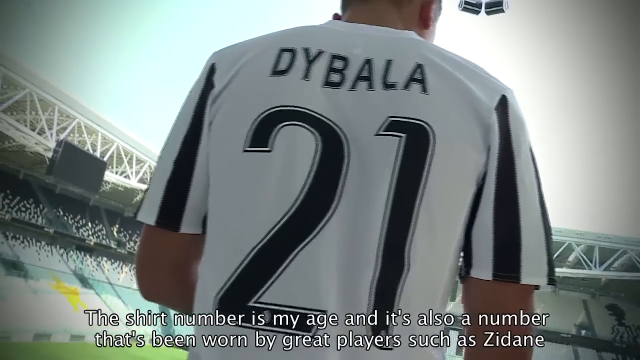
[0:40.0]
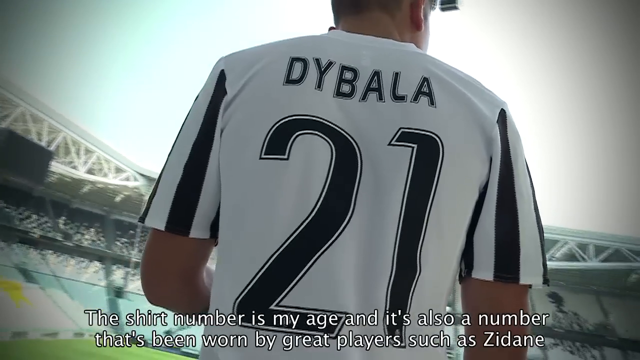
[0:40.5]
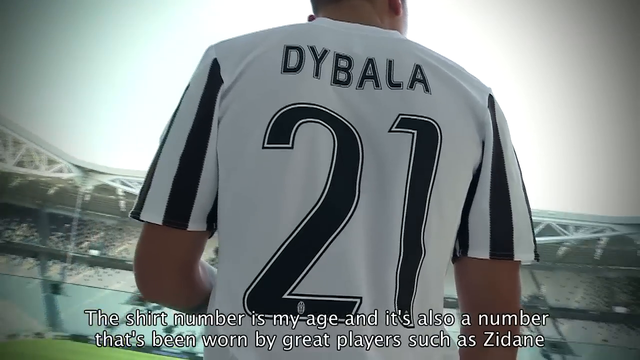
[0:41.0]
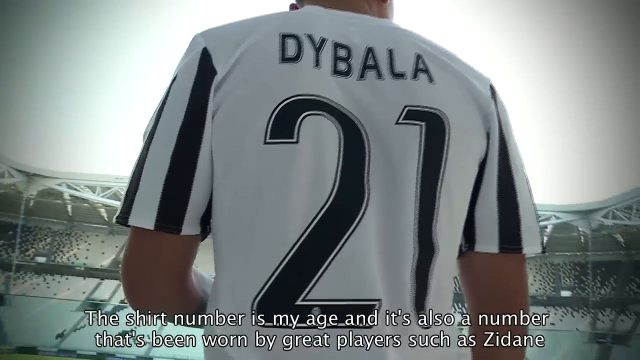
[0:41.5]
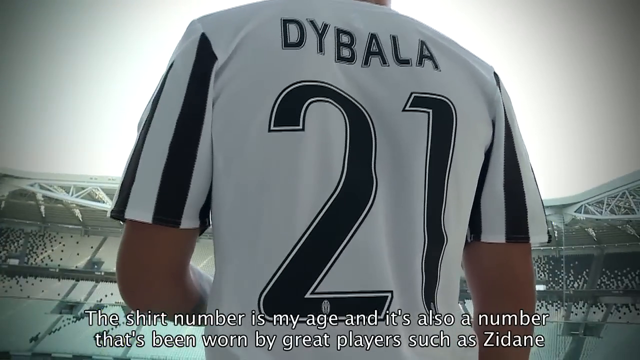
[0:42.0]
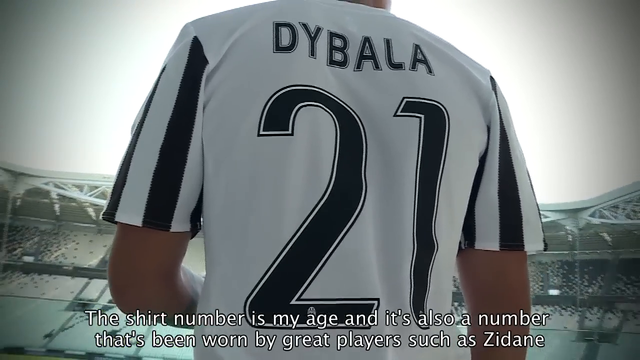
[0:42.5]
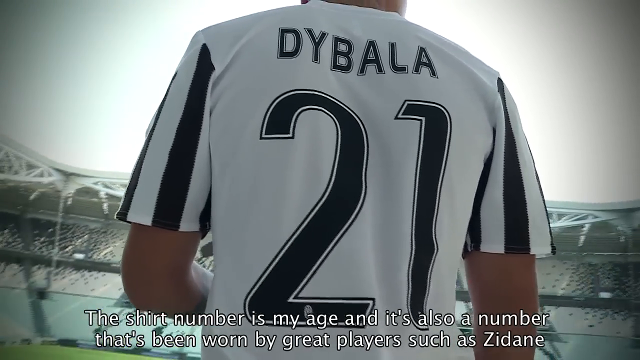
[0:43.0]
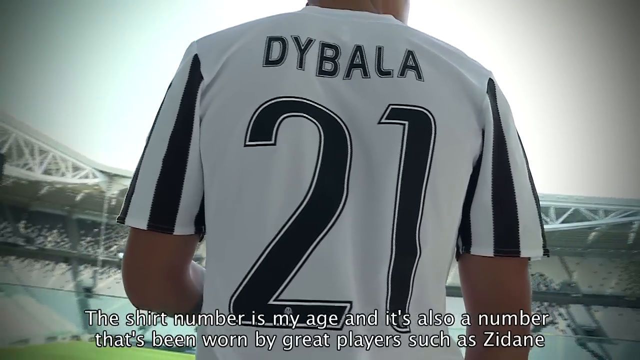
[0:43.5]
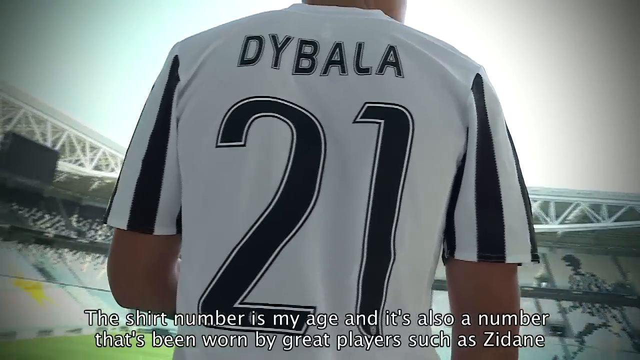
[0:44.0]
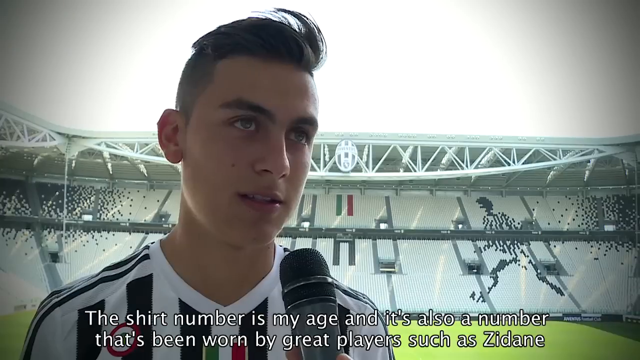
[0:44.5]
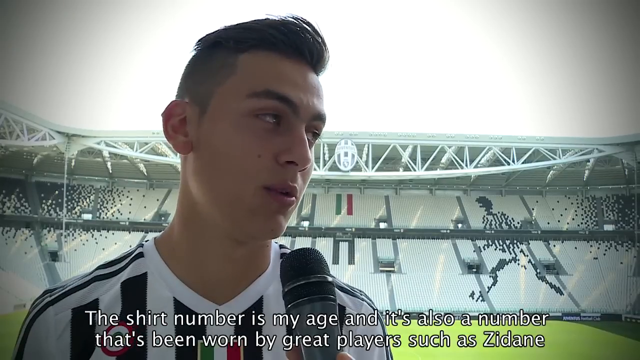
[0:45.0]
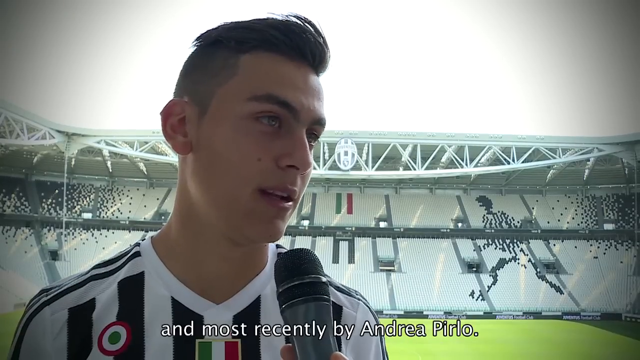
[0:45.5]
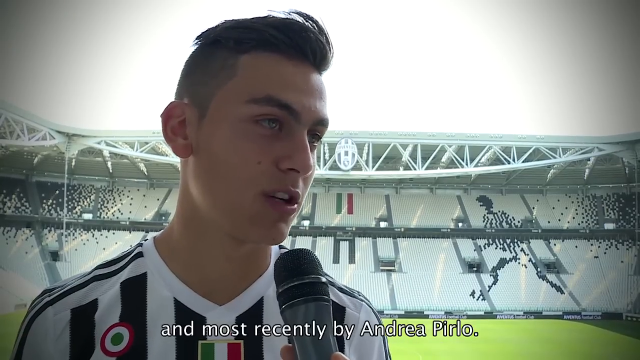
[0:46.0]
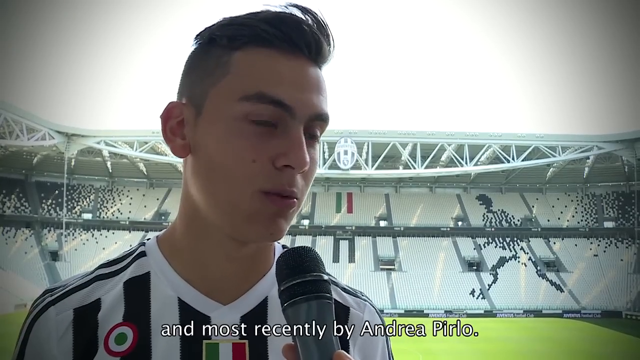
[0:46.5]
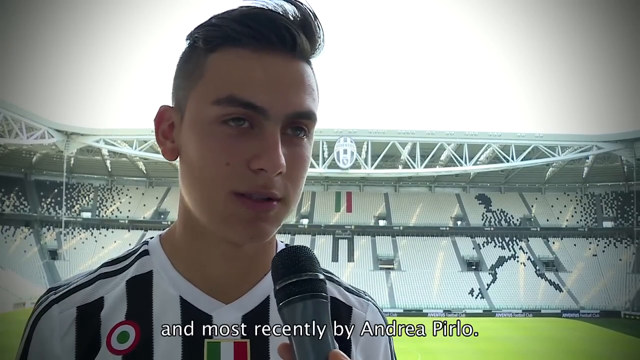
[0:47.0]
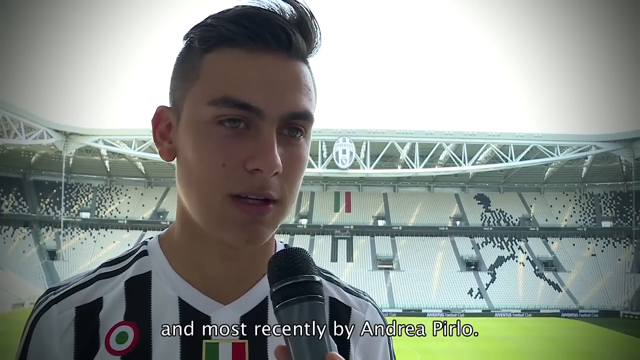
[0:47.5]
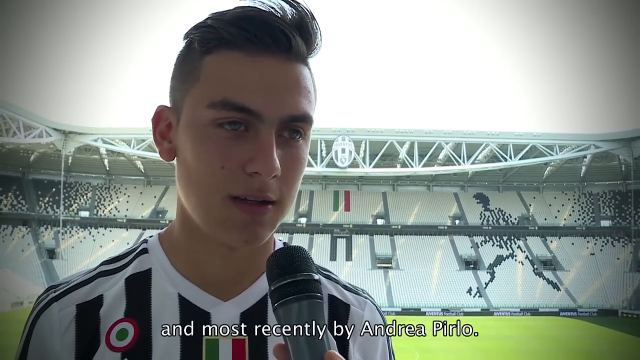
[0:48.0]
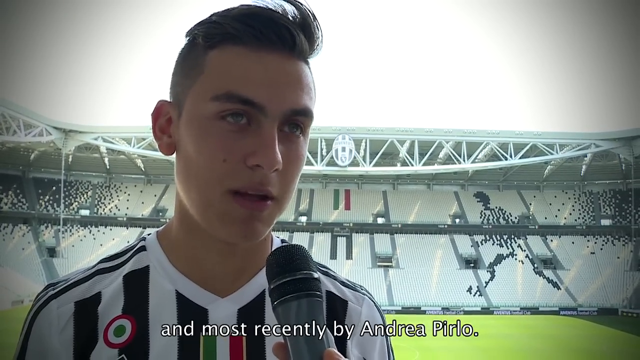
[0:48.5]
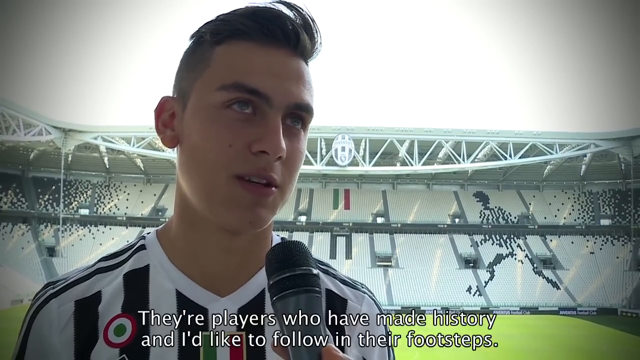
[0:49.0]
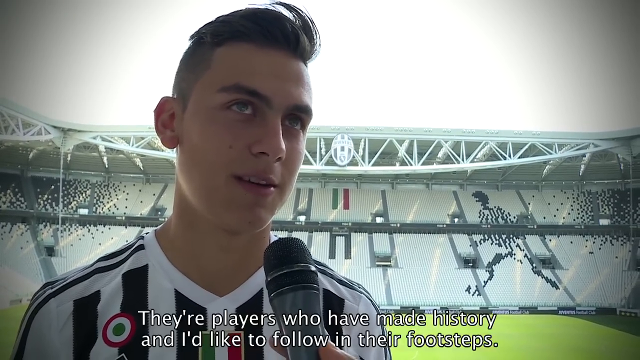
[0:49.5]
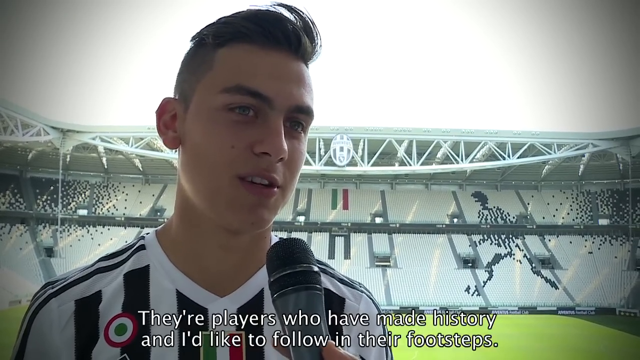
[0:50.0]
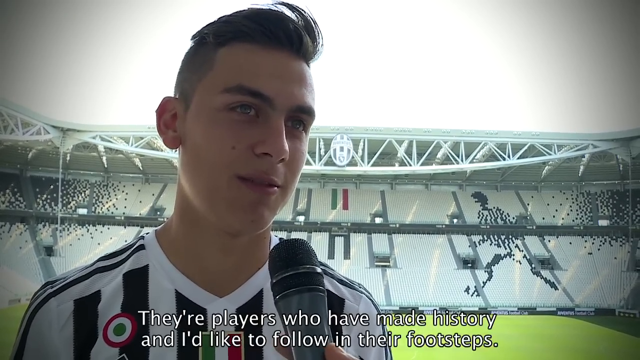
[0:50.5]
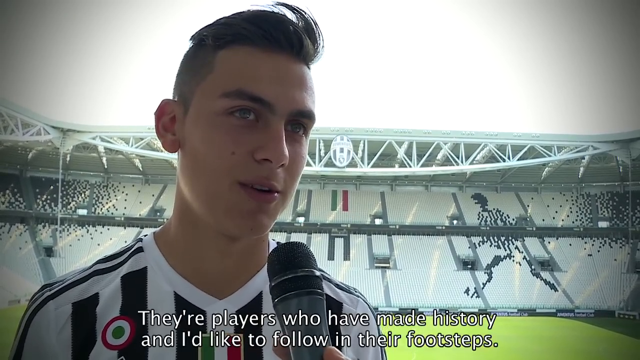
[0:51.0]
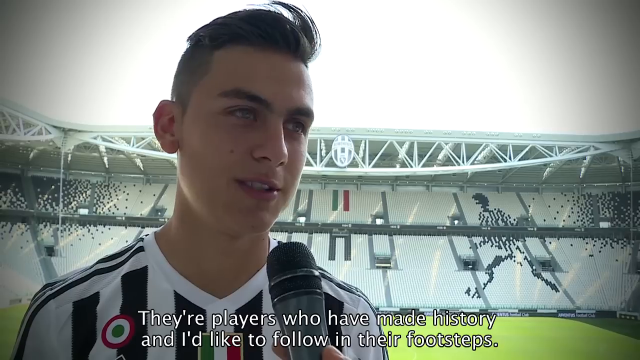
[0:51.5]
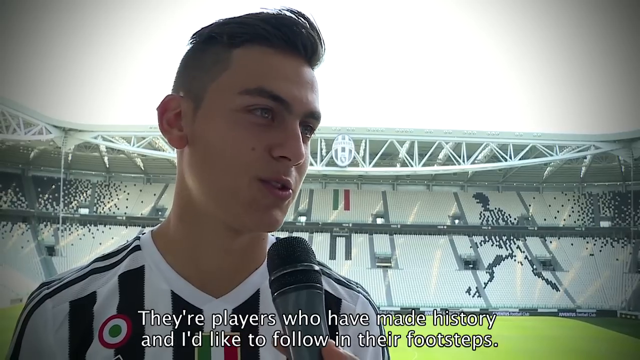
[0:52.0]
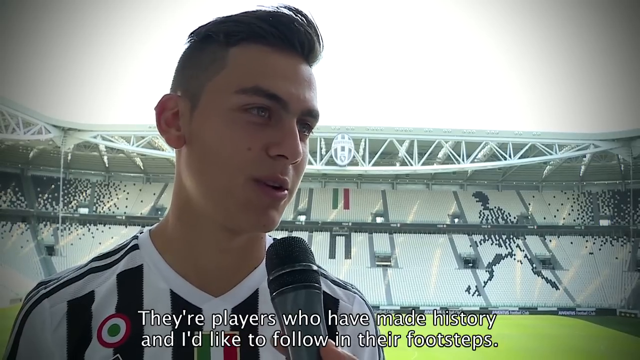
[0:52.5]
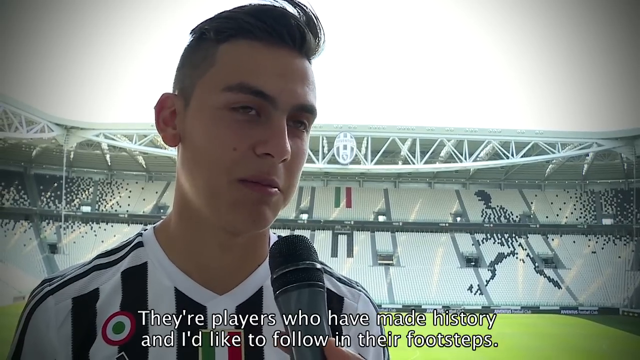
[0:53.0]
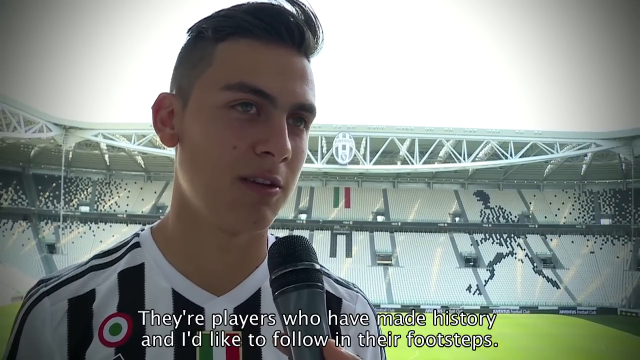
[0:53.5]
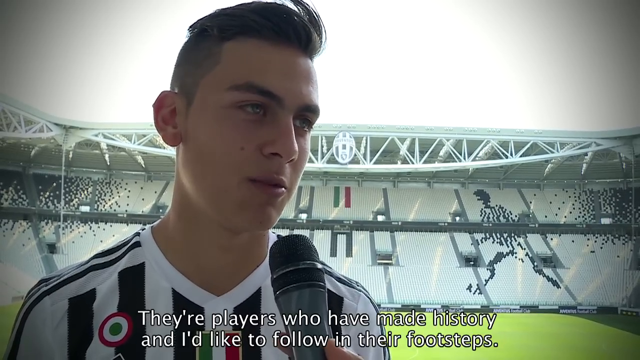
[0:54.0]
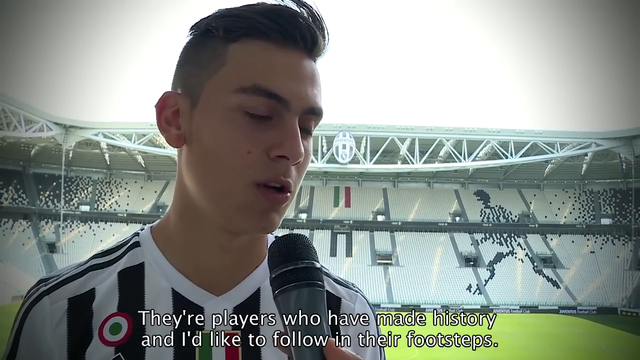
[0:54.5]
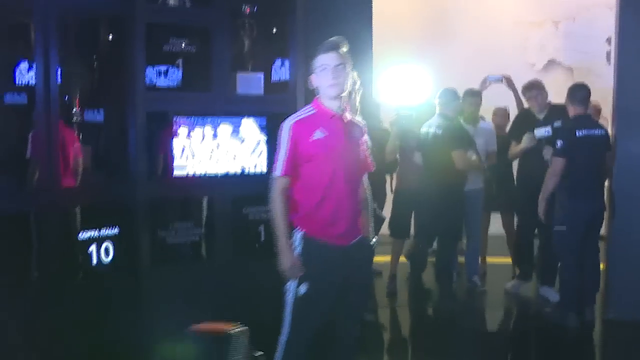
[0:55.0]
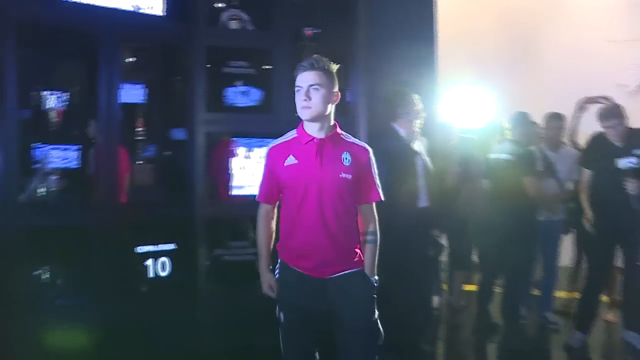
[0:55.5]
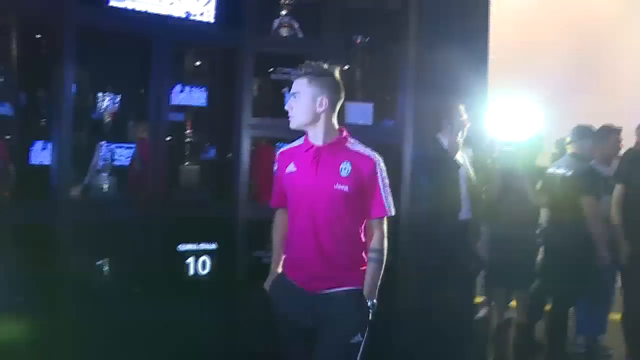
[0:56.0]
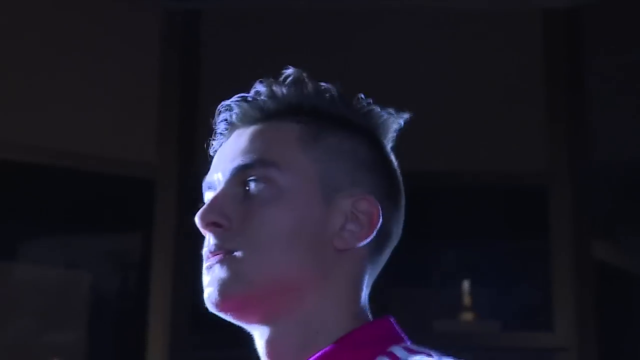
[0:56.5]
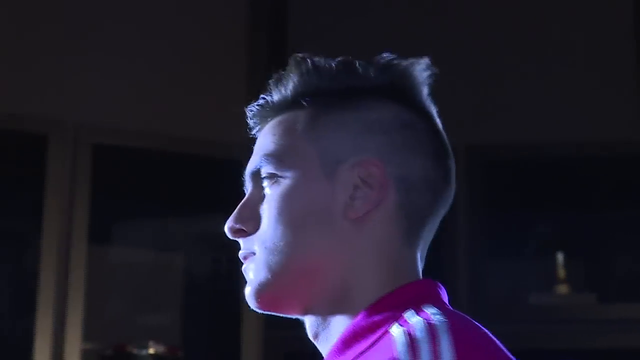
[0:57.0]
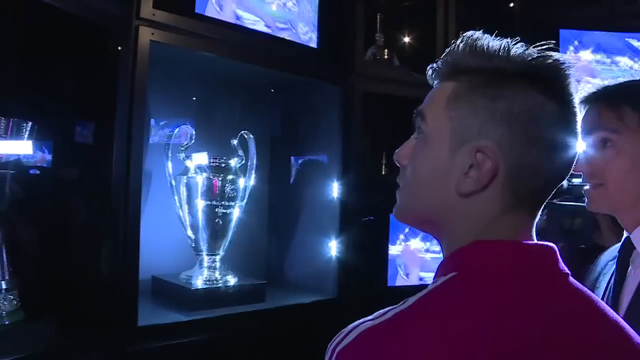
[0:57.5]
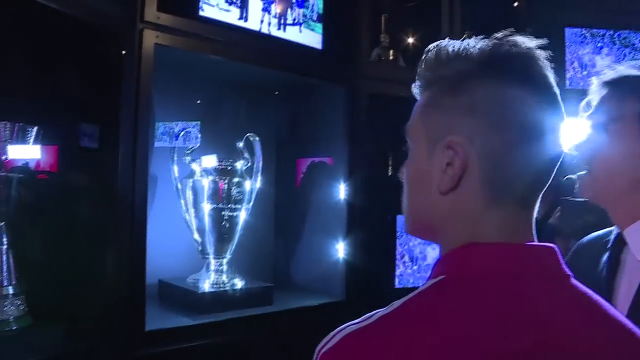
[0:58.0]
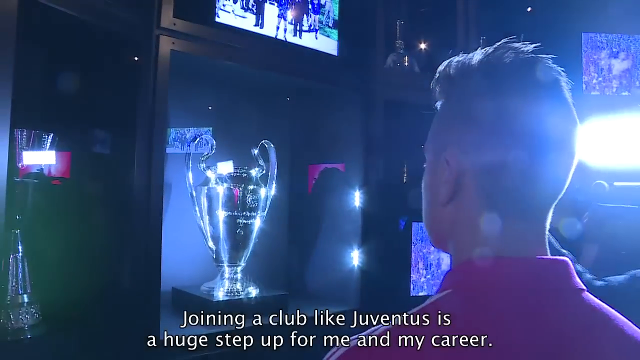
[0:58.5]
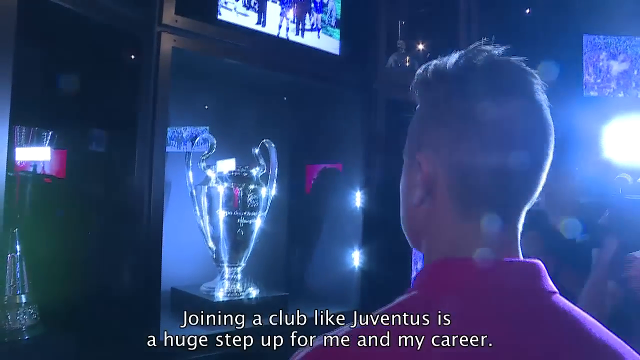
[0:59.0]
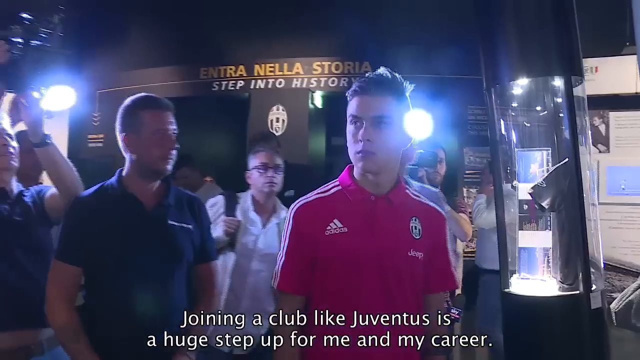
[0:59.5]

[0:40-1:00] Dybala appears in a different jersey, apparently the Juventus game day shirt, with the number 21 on the back. The camera pans and zooms in on the back of his jersey, showing a close-up of the number 21. During the interview he appears to smile and have a positive posture.